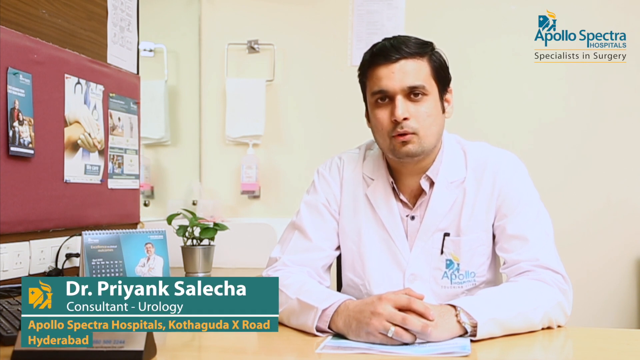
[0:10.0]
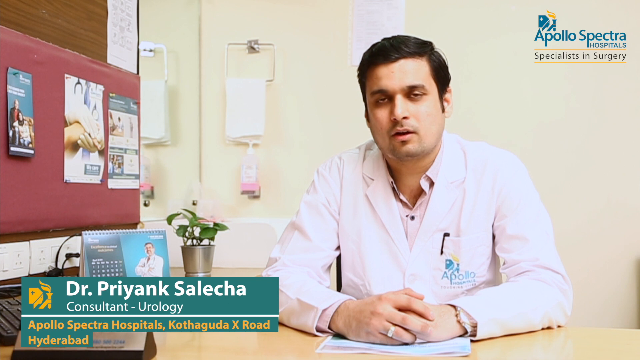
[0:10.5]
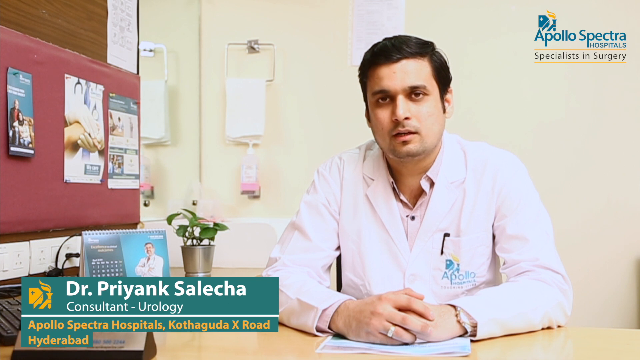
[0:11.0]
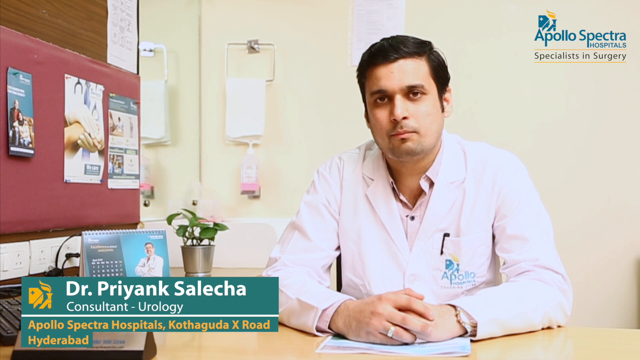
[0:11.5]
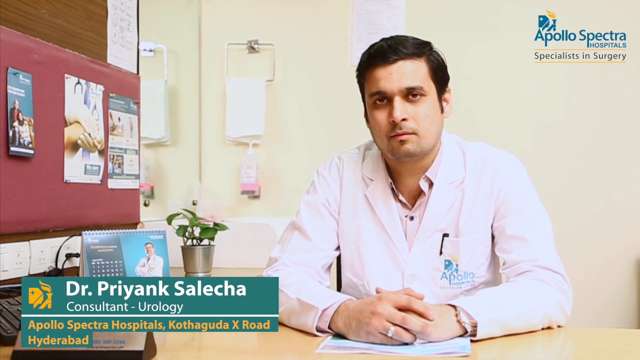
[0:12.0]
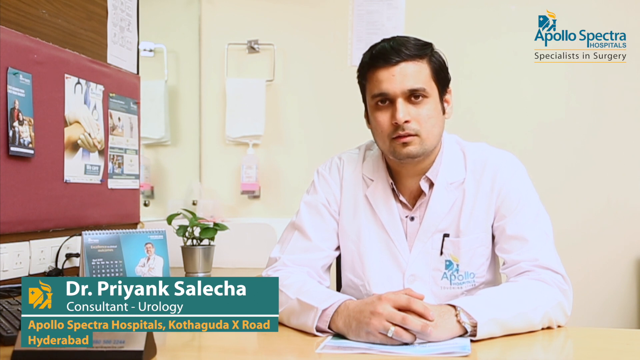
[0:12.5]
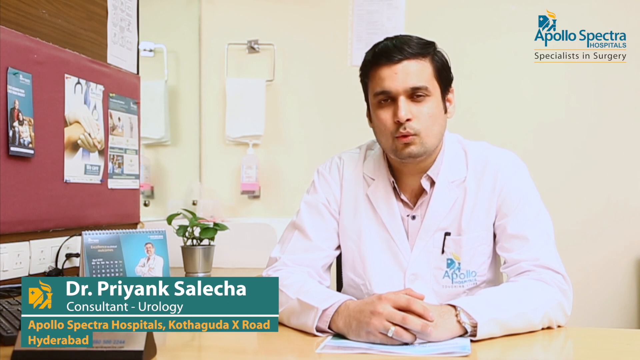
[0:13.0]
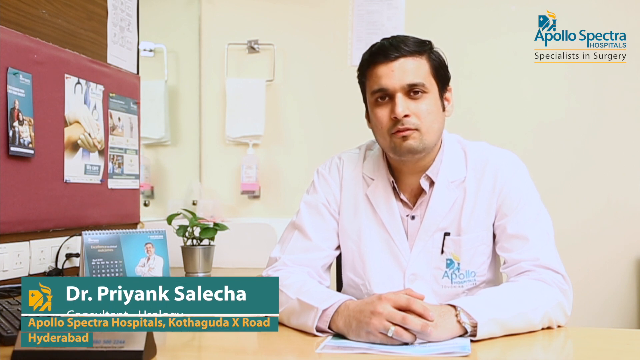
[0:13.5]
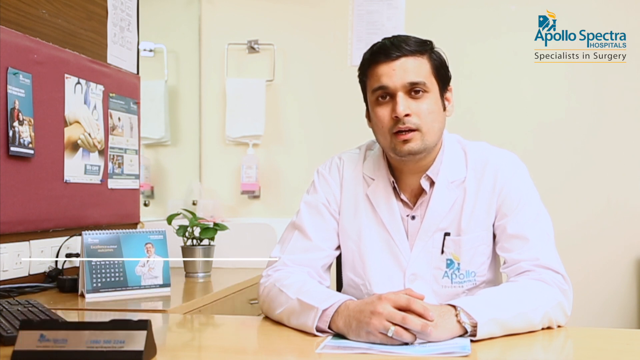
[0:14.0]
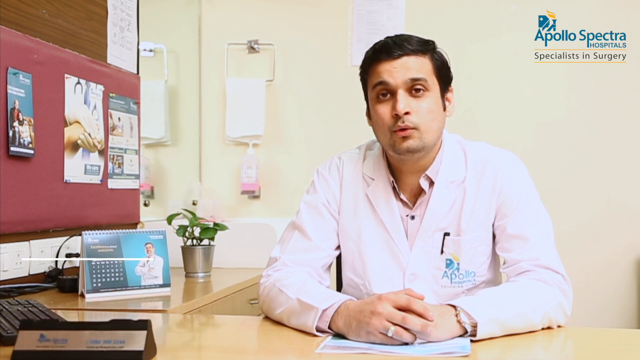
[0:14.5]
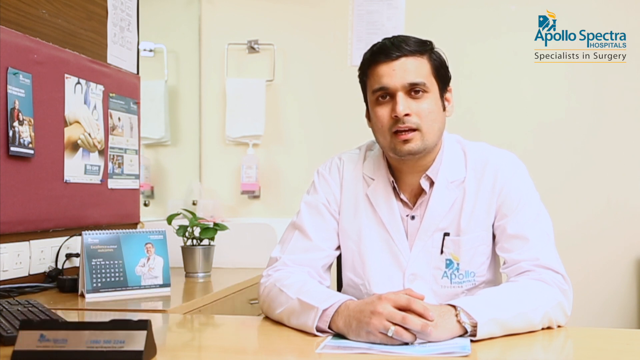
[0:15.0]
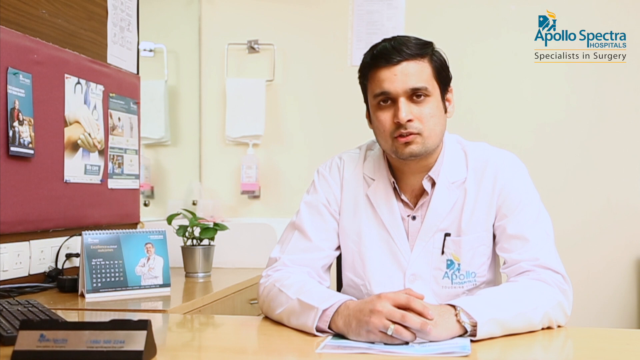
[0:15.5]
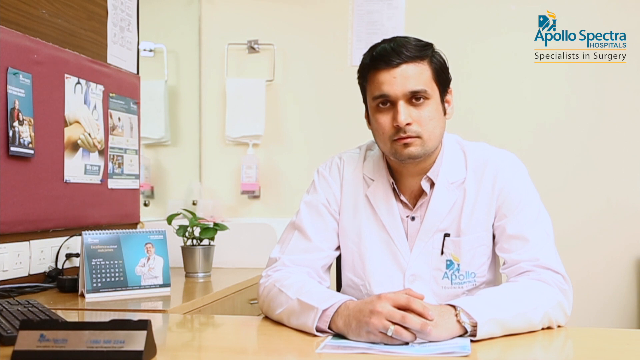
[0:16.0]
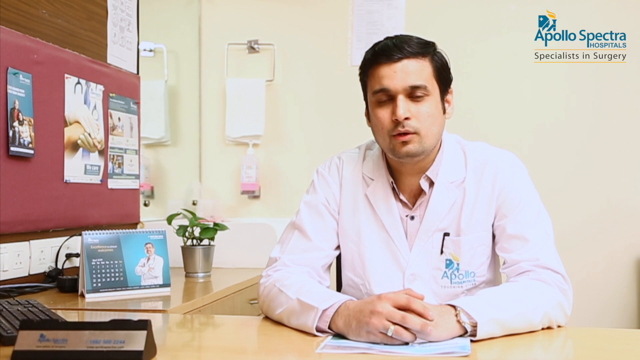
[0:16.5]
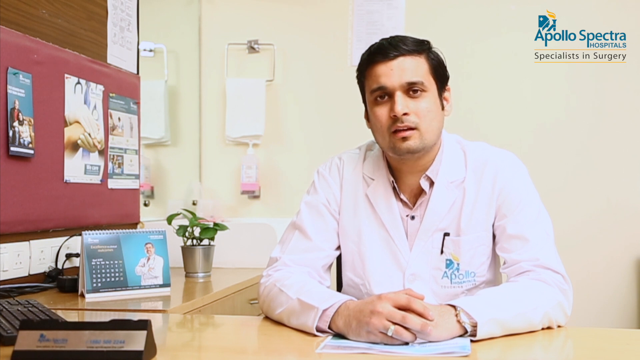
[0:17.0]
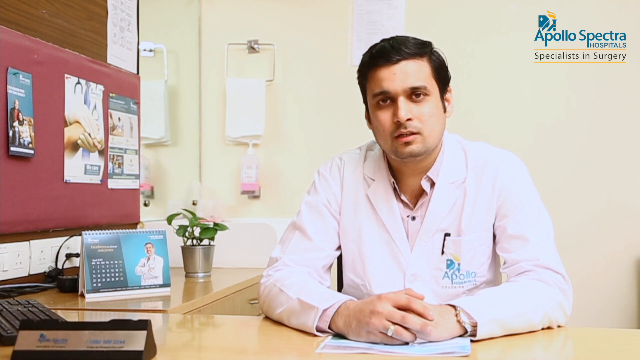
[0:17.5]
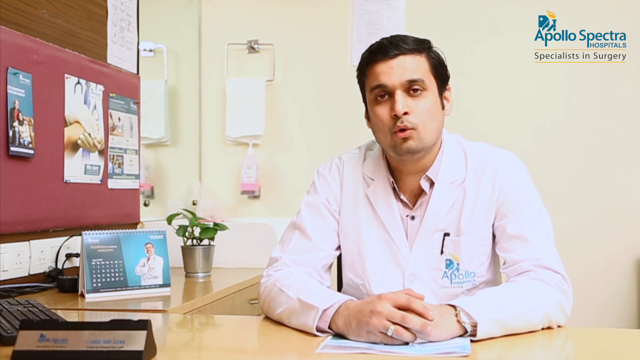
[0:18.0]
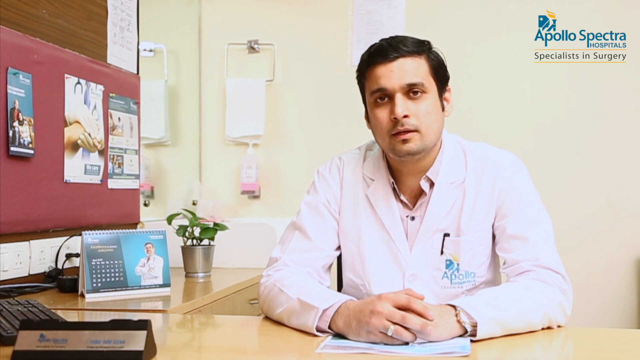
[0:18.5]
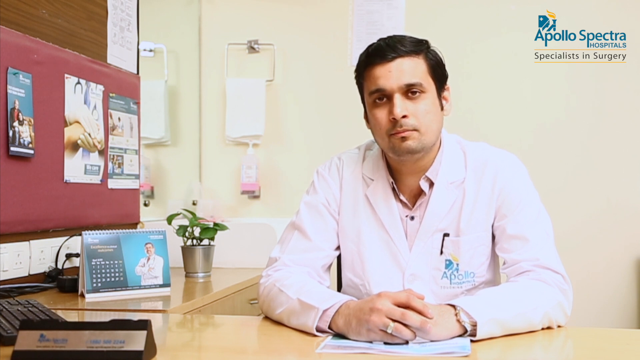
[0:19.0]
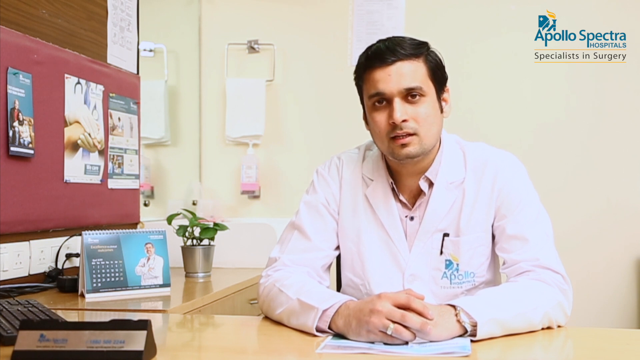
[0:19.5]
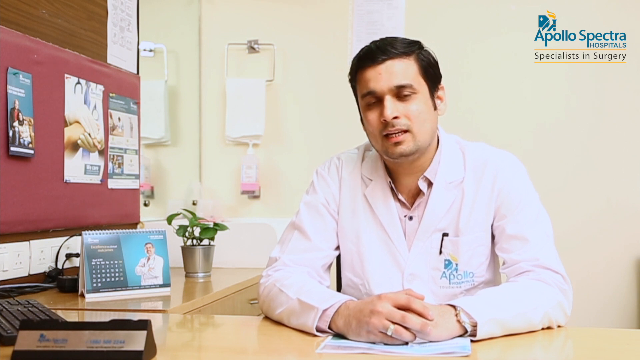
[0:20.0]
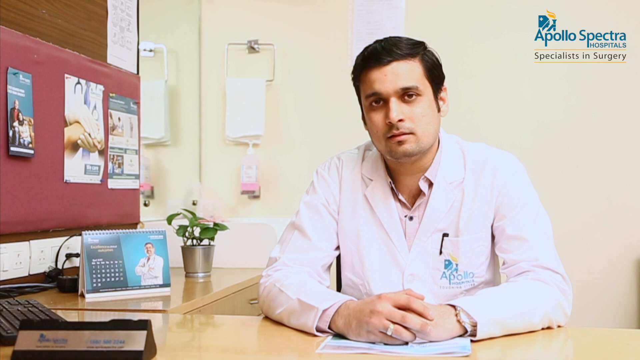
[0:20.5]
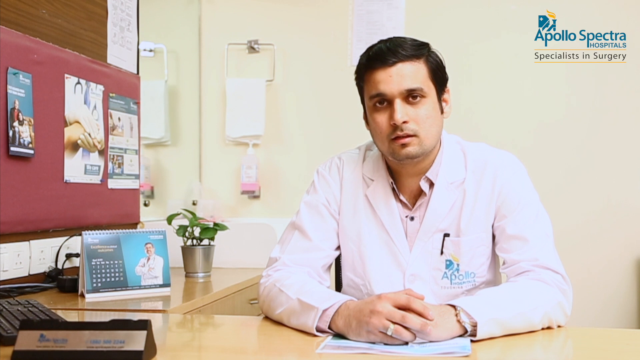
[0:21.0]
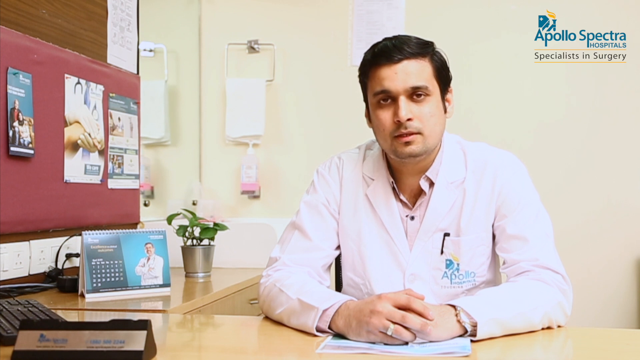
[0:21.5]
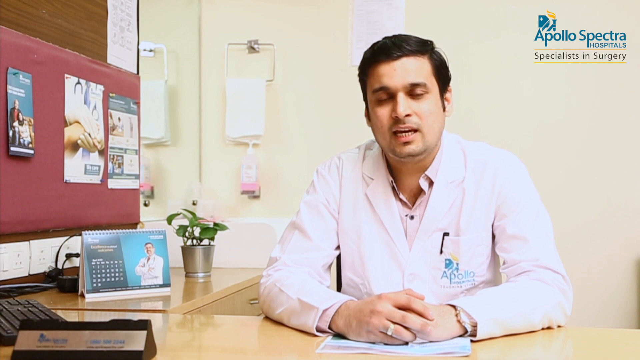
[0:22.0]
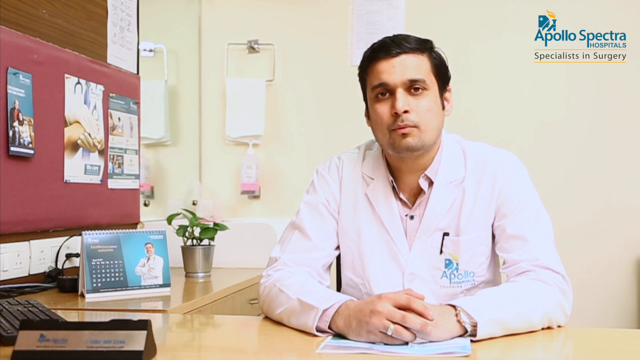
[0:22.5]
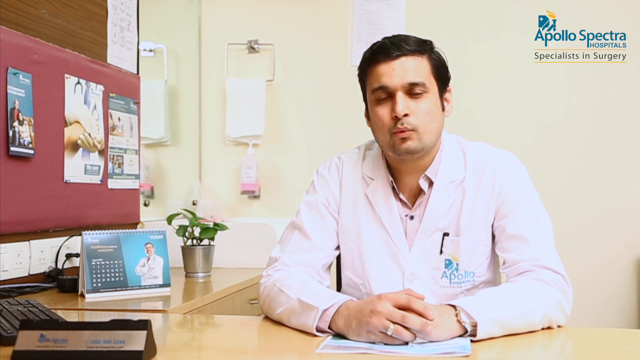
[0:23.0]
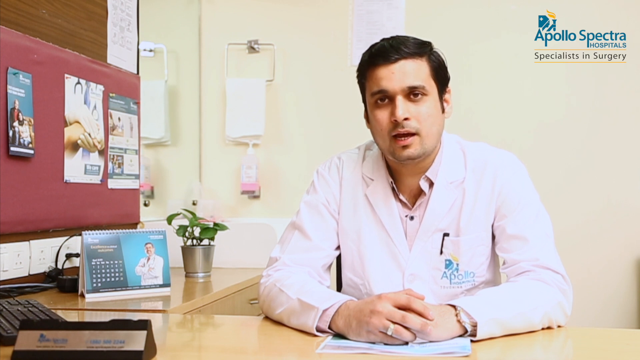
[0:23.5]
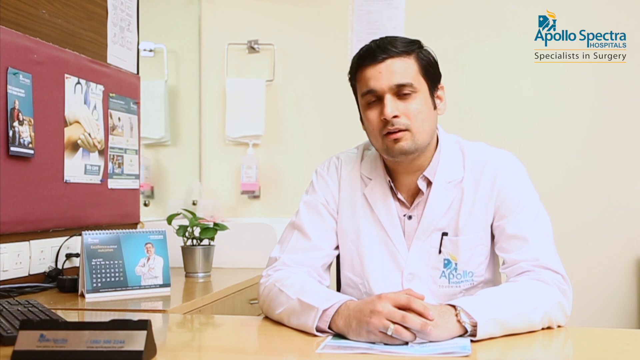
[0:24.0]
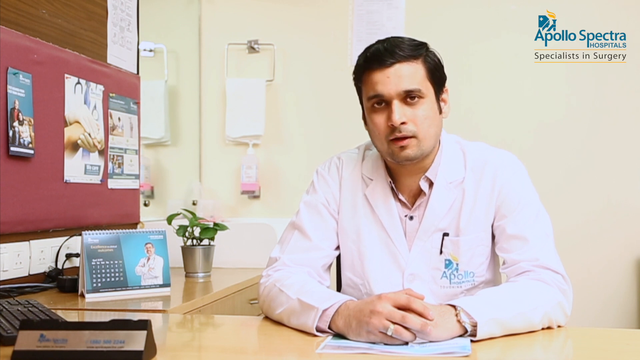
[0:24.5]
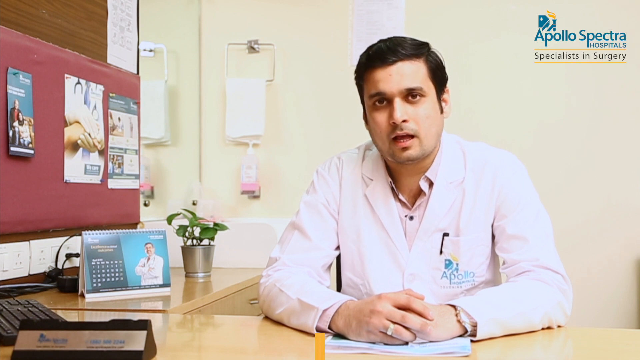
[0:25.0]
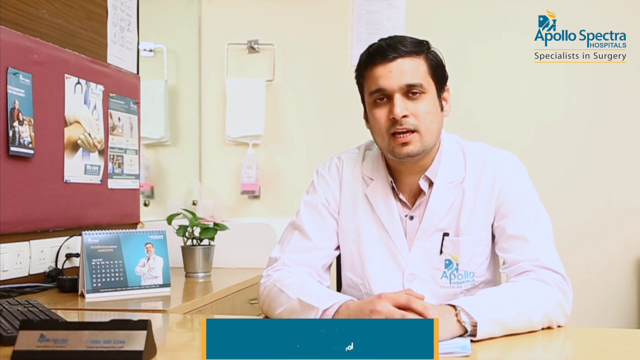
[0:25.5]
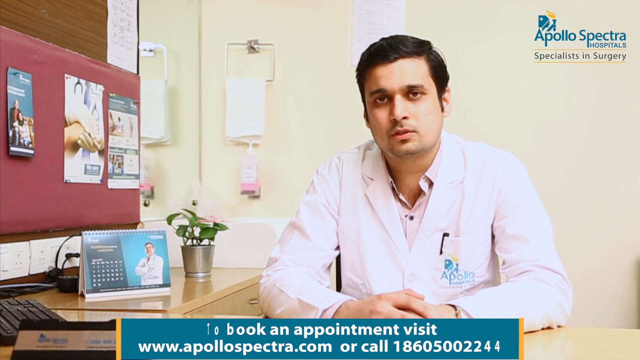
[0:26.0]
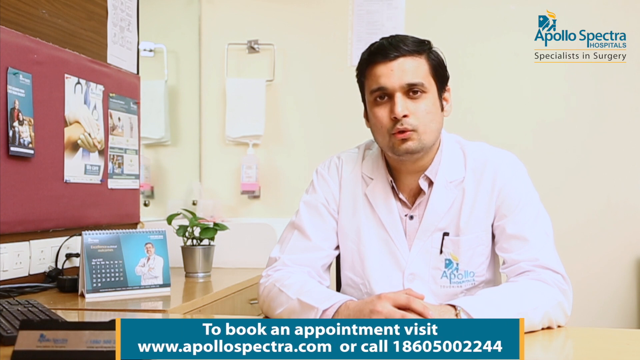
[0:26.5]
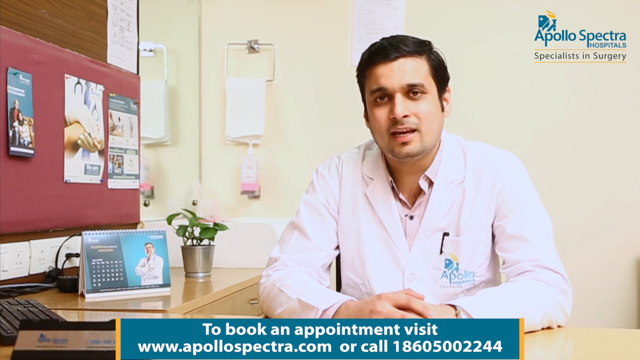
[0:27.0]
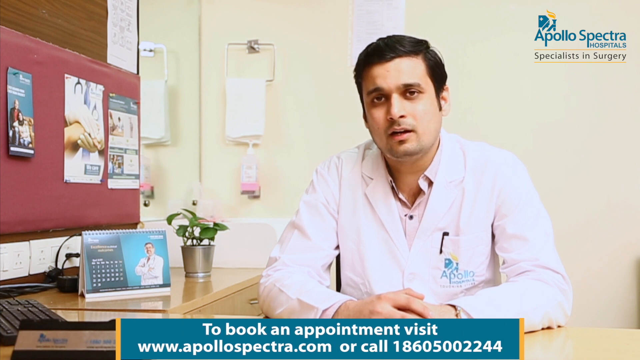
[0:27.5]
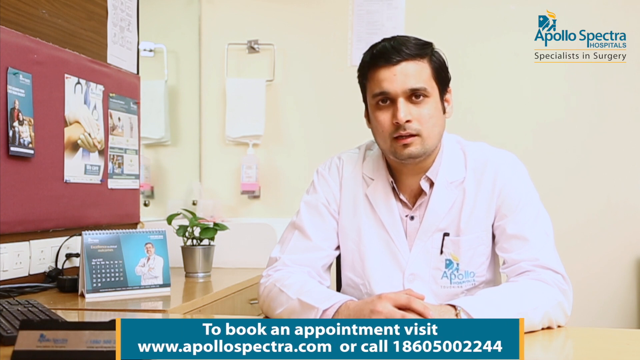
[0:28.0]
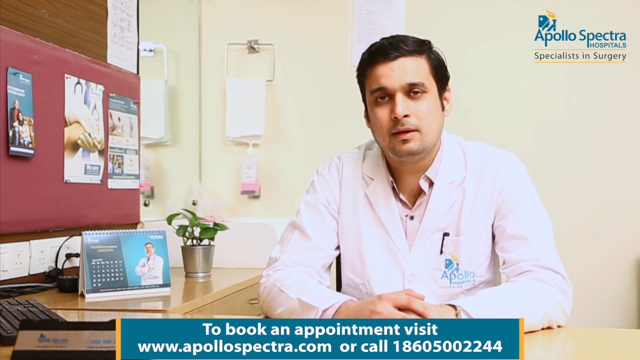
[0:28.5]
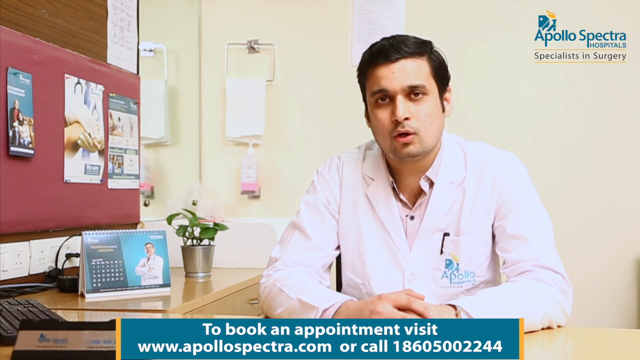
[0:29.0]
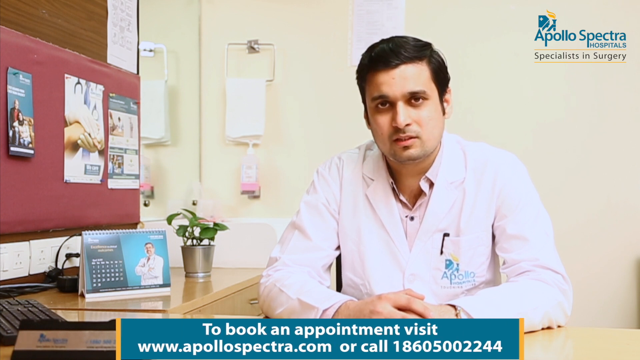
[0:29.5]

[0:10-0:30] The man wears a white lab coat and a button-up shirt. A graphic with a teal background appears in the bottom left-hand corner with his name: "Dr. Priyank Salecha, consultant urology, Apollo Spectra Hospitals, Kathandu, X-Road, Hyderabad." In the upper right-hand corner is the logo for Apollo Spectra Hospitals, a specialist in surgery. The man is probably about 40 years old, looks Indian, and has dark hair. He wears a watch and a ring, and he crosses his hands with a serious look as he speaks into the camera. A graphic pops up at the bottom of the screen that says "to book an appointment, visit www.ApolloSpectra.com or call" followed by the phone number "1-860-500-2244." The background is a cream-colored wall with a hand towel hanging up and a soap dispenser next to a mirror and a sink.